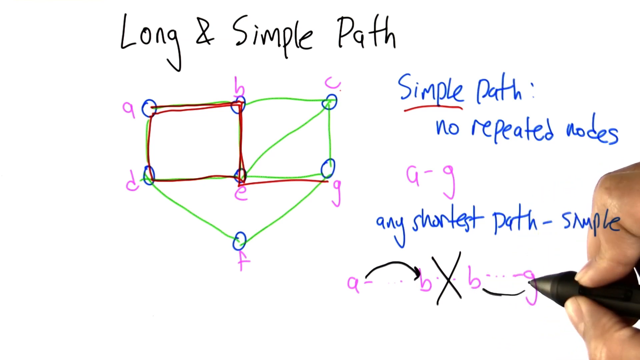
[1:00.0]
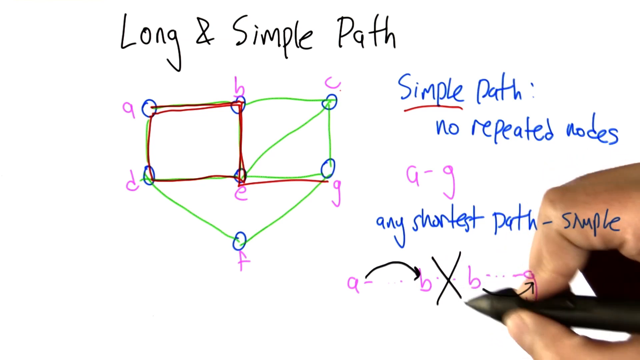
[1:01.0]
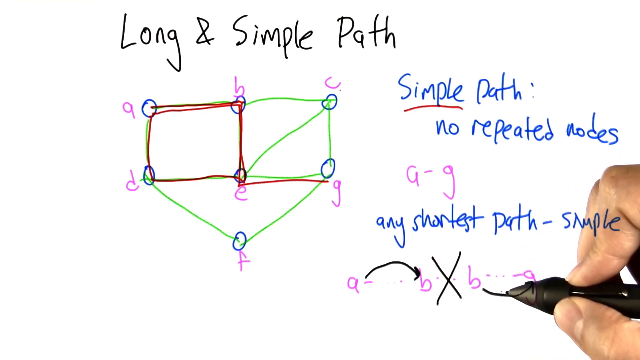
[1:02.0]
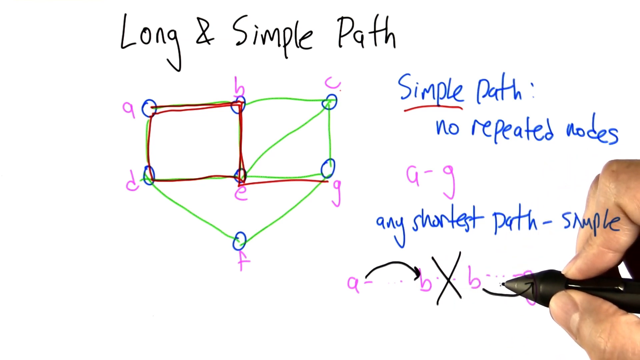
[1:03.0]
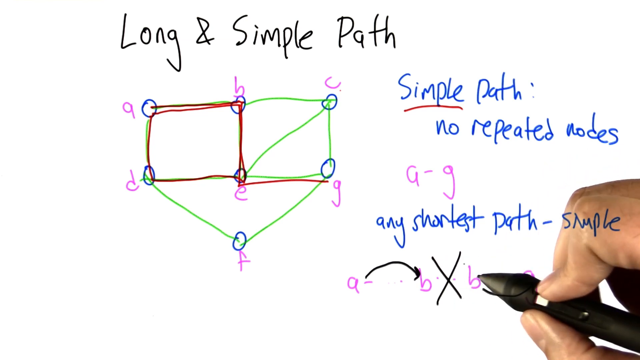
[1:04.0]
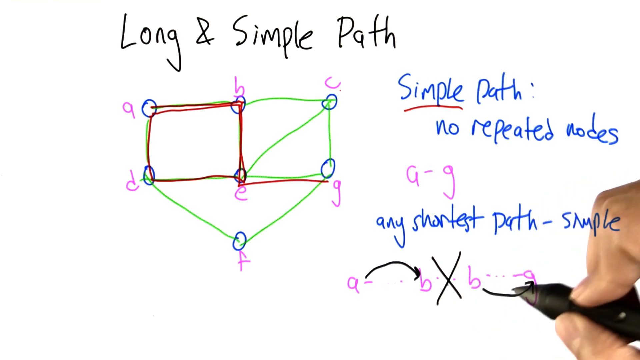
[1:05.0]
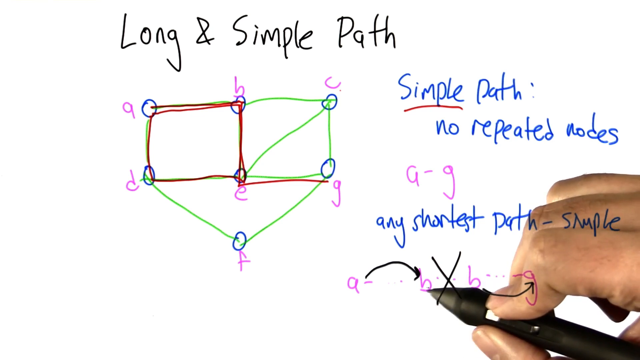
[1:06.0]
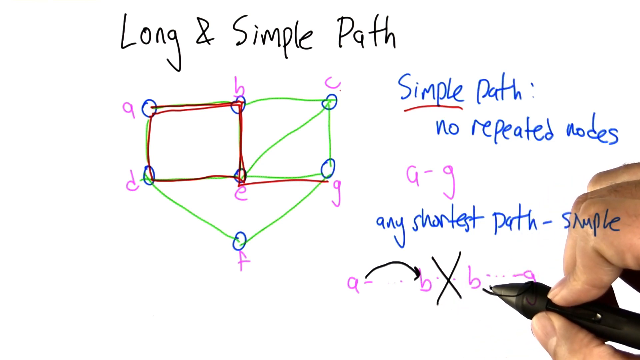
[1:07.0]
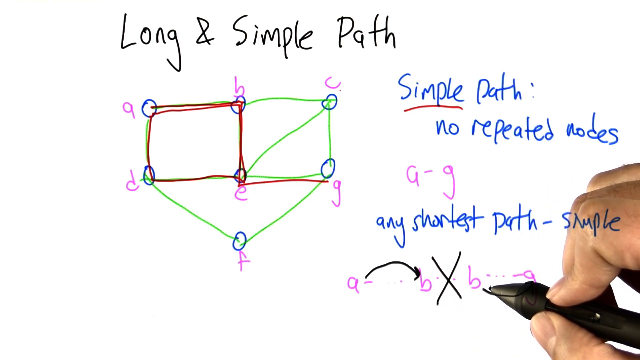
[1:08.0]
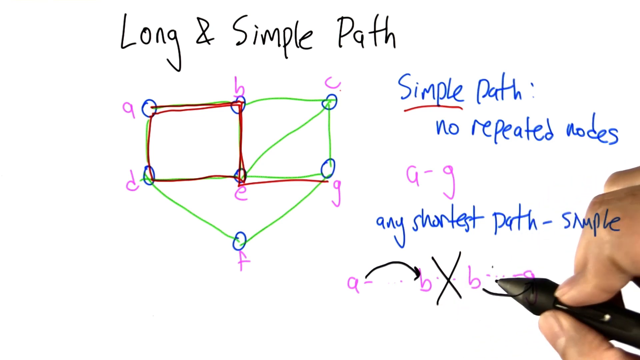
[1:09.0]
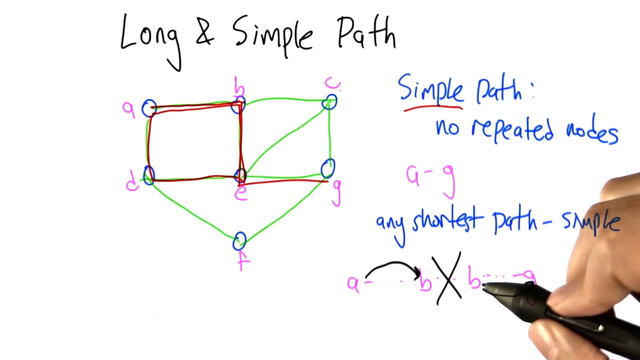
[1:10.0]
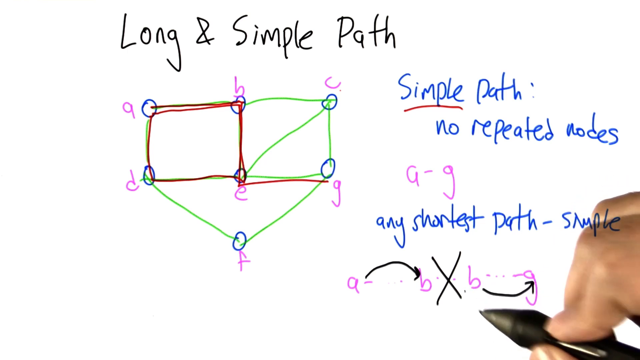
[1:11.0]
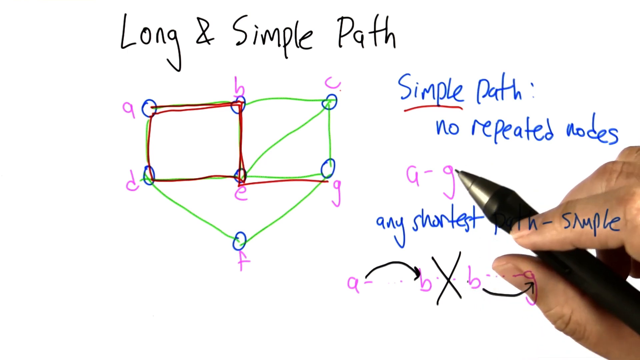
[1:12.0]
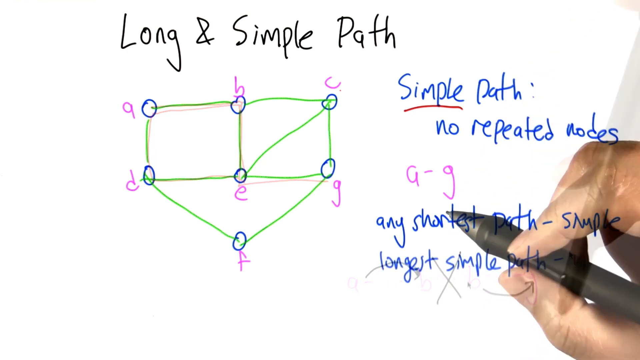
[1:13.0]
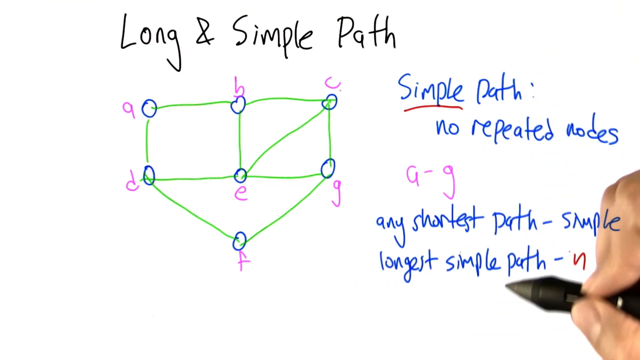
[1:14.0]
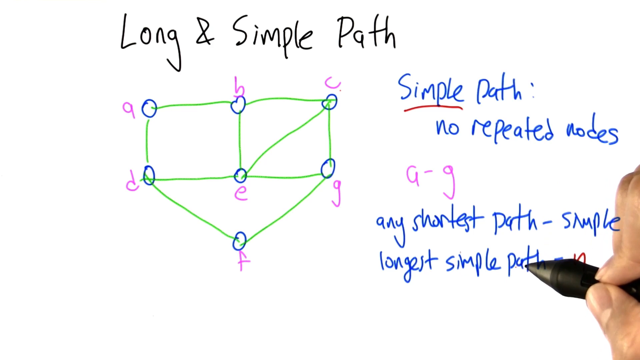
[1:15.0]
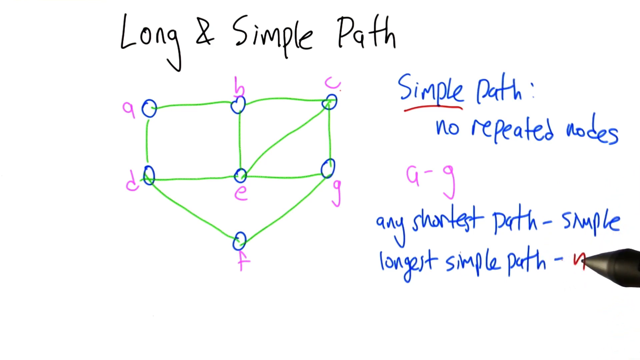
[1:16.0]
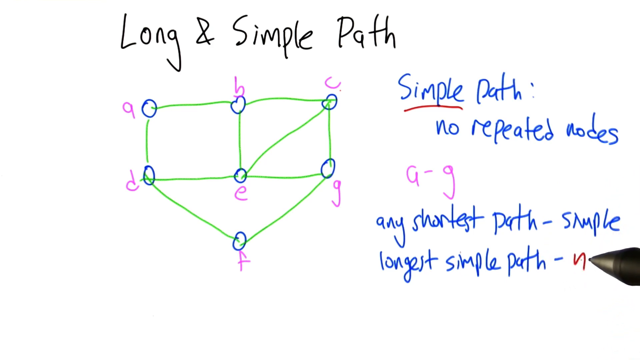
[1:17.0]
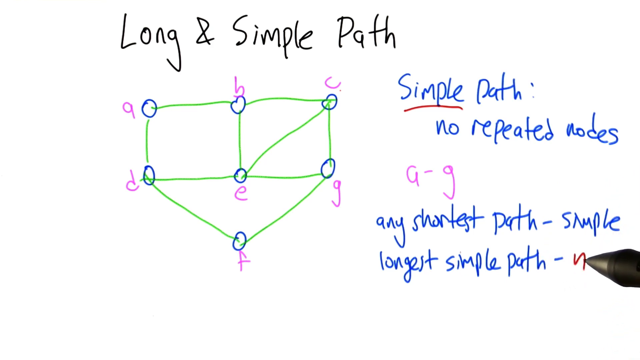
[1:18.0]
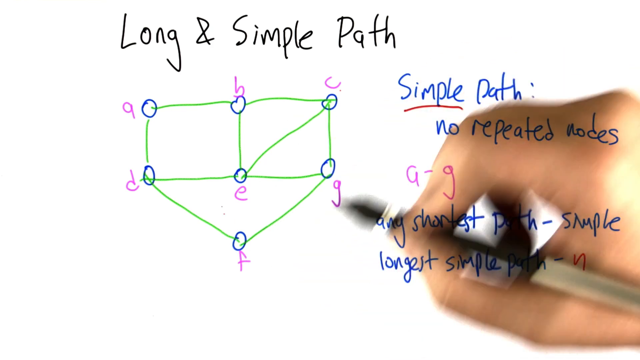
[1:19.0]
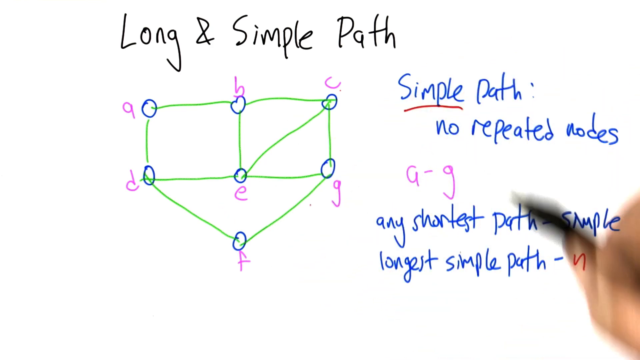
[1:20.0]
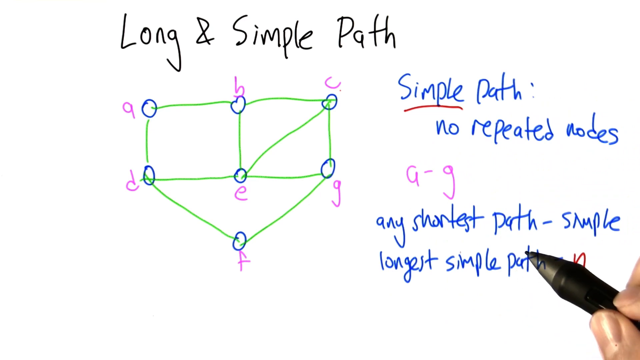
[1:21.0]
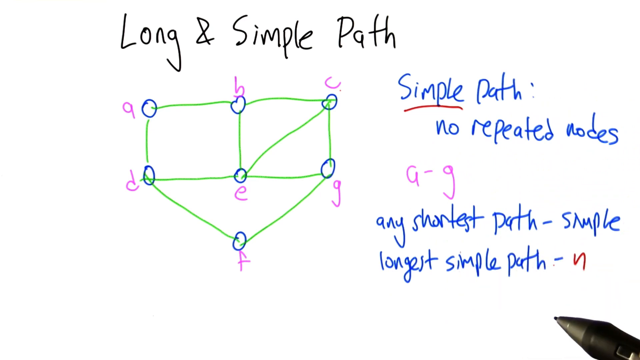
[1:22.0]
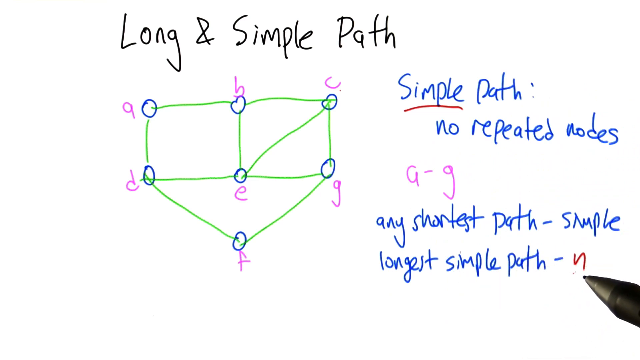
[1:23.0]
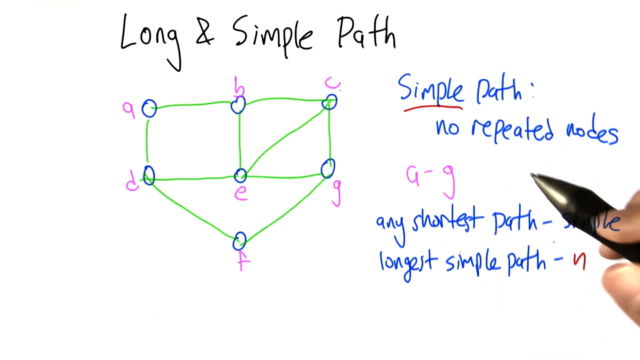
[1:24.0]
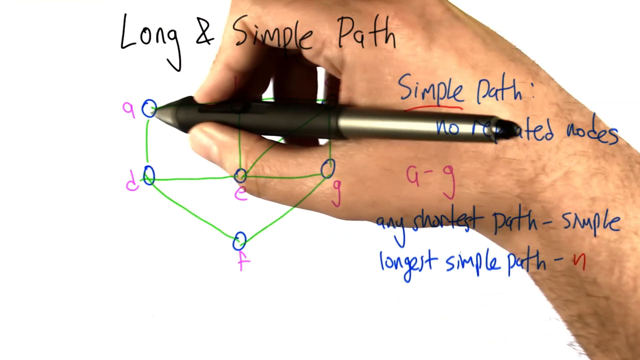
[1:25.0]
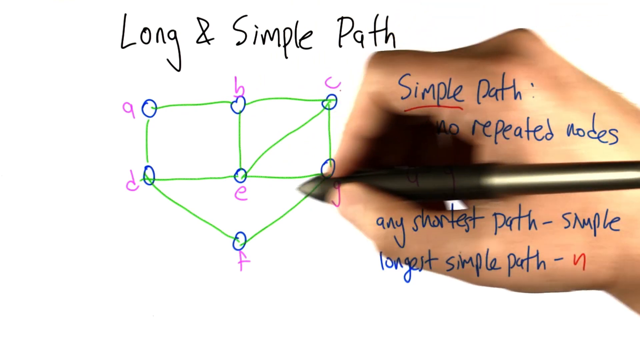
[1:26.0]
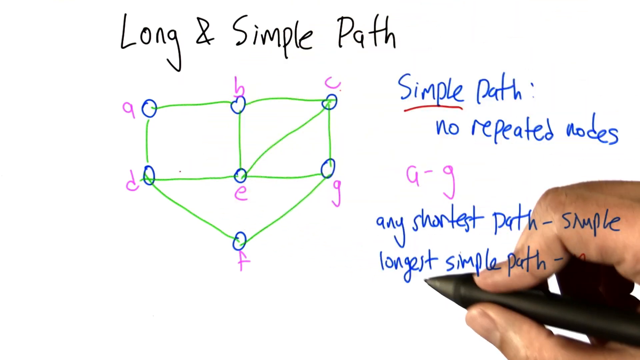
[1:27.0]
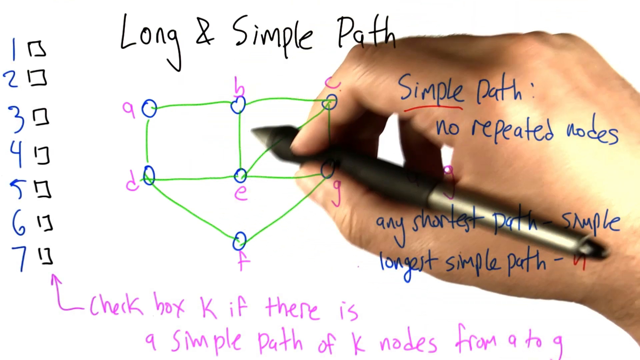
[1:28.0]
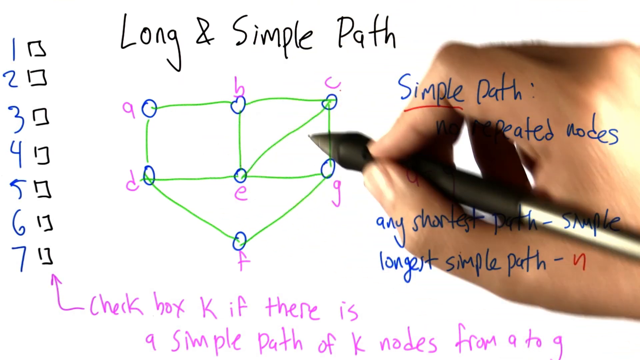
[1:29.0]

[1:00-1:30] A hand holds a pen and draws, using red ink. The zeros used to draw the diagram are in blue and green, the circles are in blue, and alphabet letters are in pink. The hand writes "simple path" and an equation, a minus b times b, apparently trying to work out the answer. The hand wears no accessories. No animals and no other people appear; only the hand drawing is visible, with a lot of writing on the page.